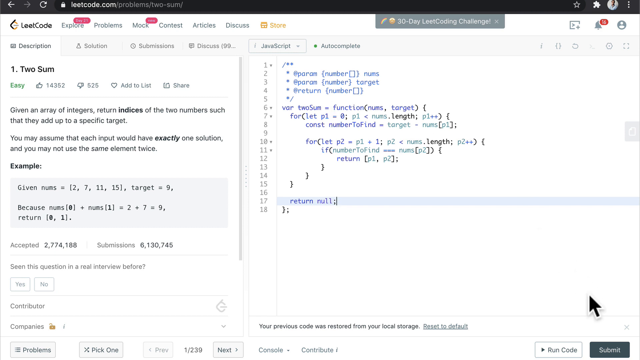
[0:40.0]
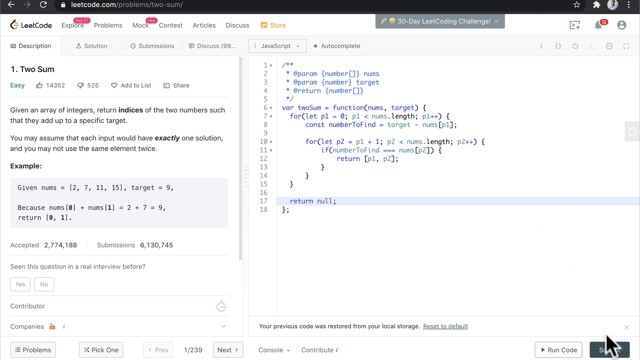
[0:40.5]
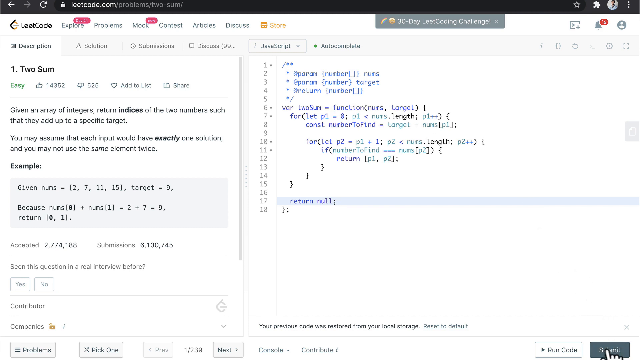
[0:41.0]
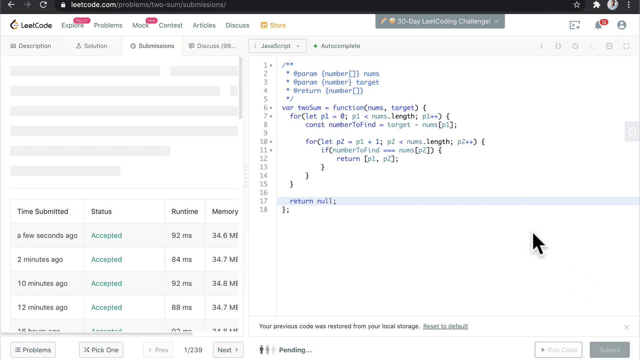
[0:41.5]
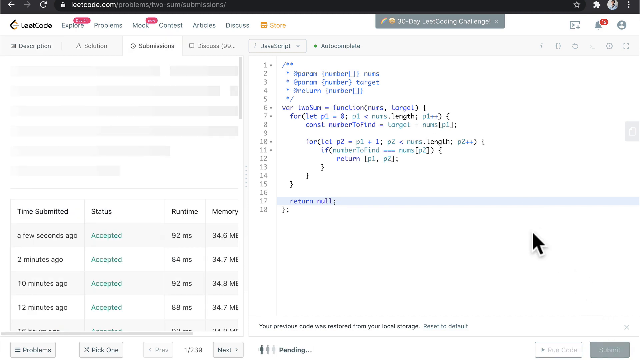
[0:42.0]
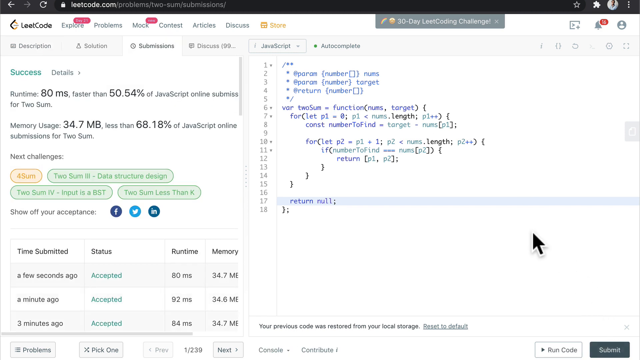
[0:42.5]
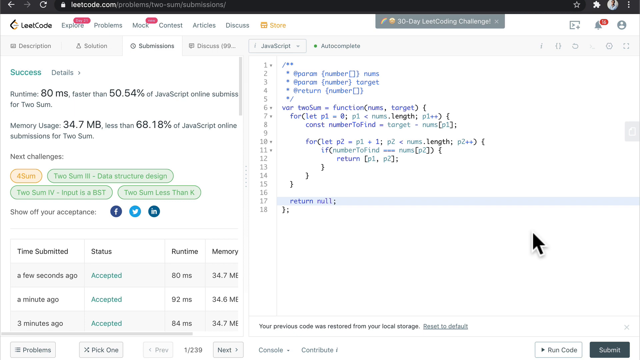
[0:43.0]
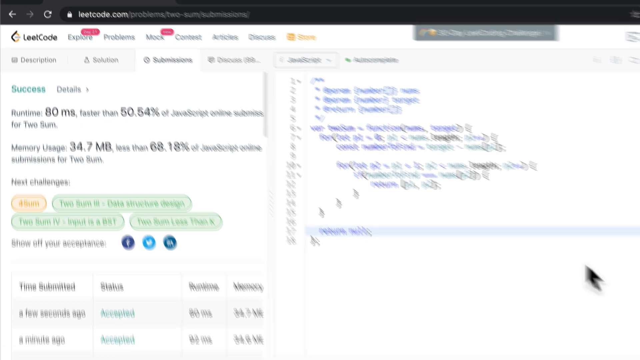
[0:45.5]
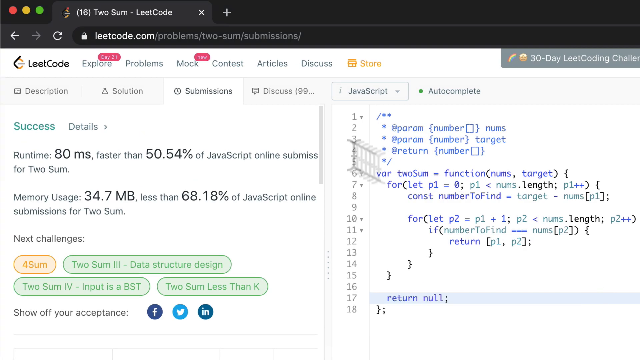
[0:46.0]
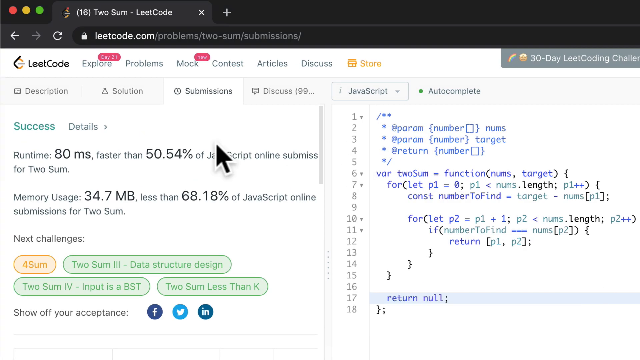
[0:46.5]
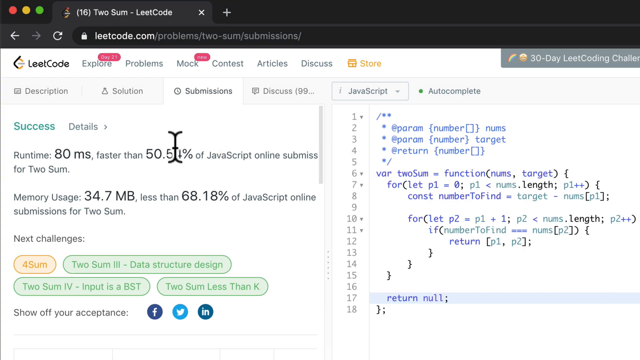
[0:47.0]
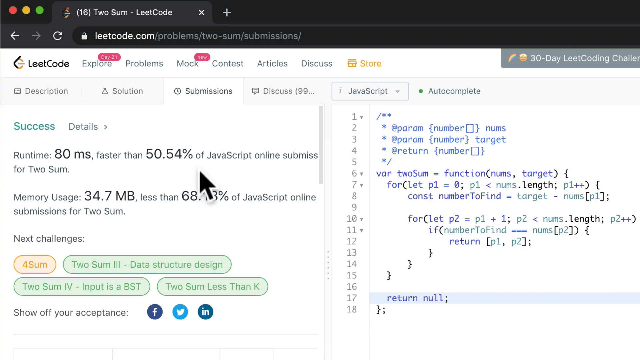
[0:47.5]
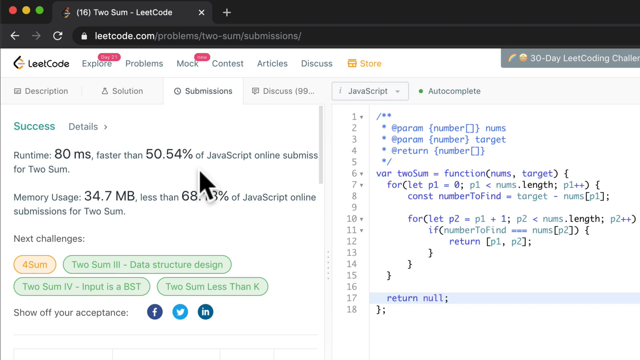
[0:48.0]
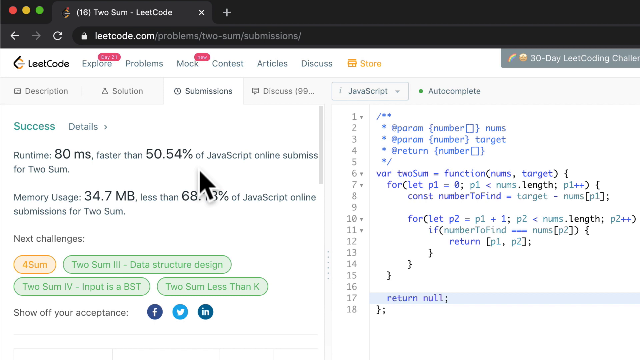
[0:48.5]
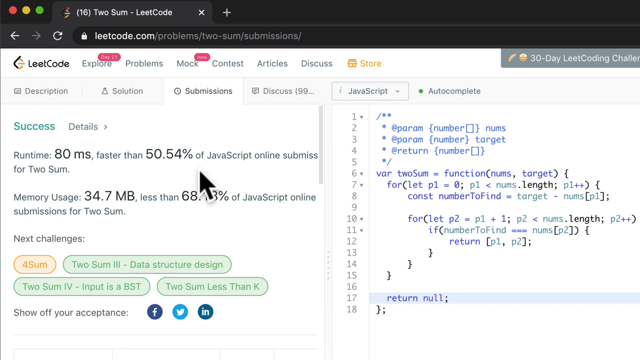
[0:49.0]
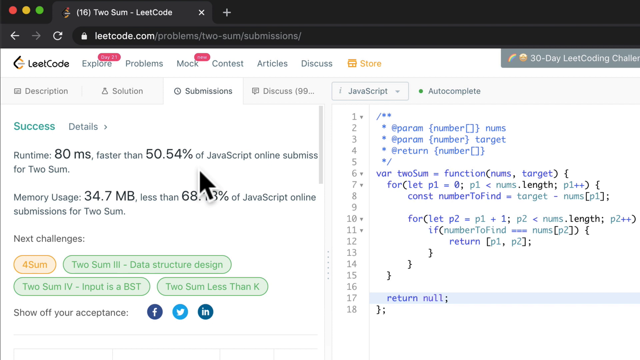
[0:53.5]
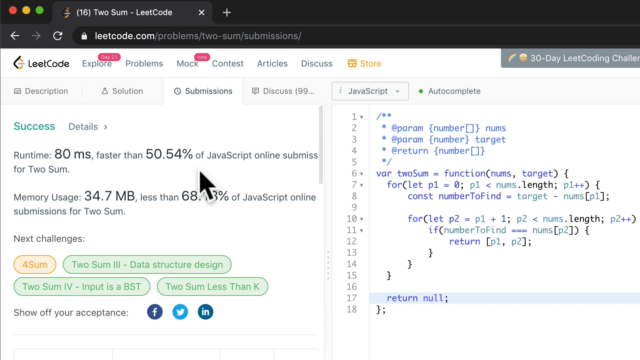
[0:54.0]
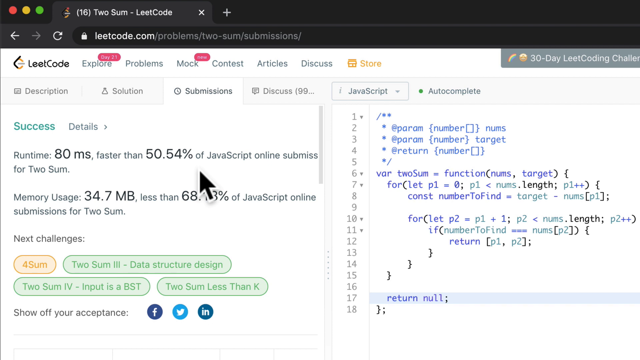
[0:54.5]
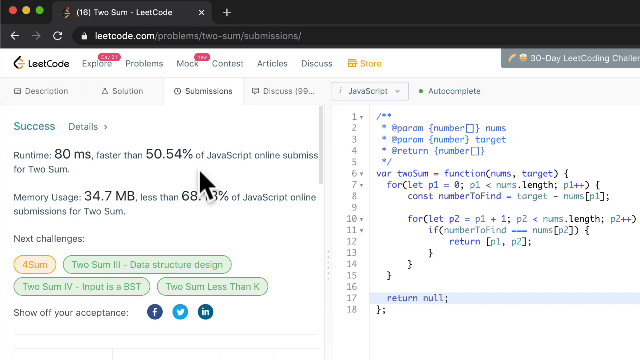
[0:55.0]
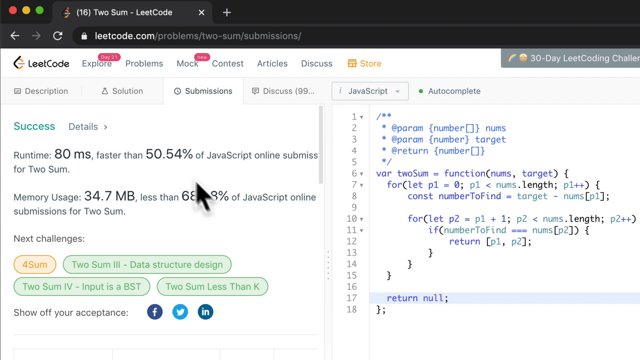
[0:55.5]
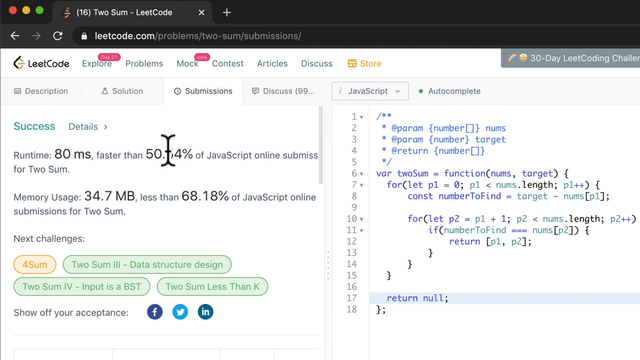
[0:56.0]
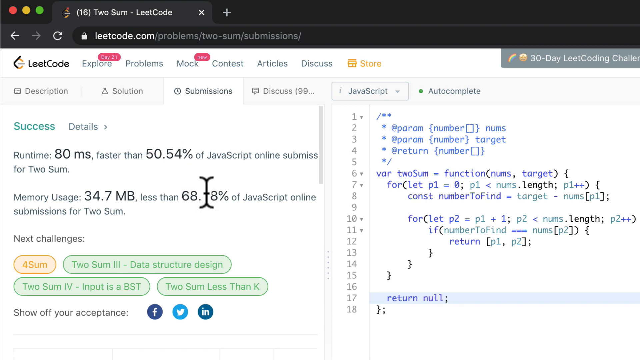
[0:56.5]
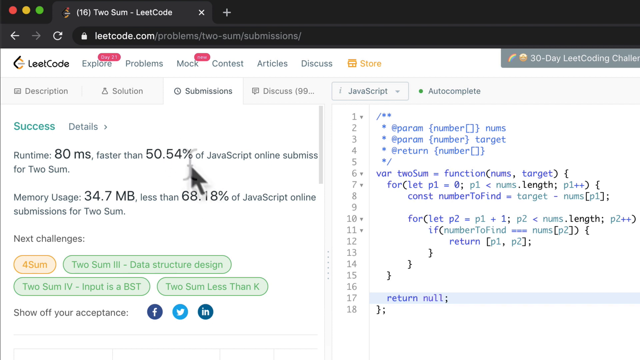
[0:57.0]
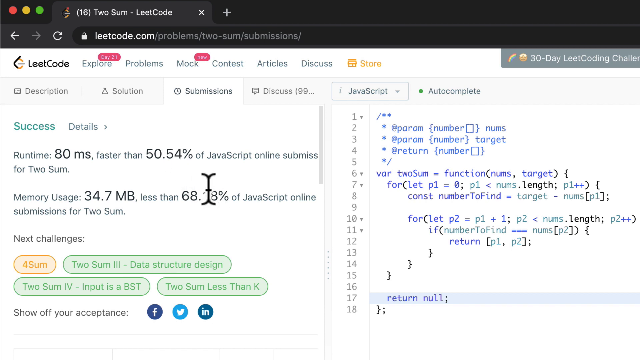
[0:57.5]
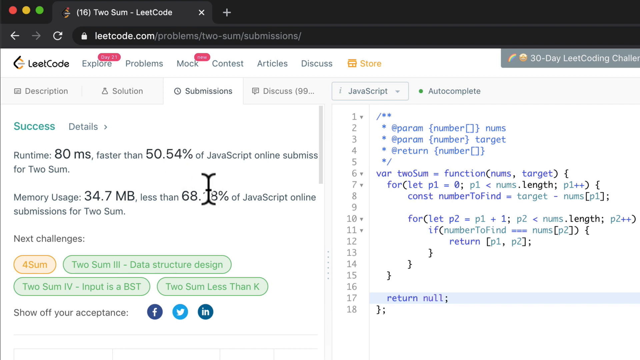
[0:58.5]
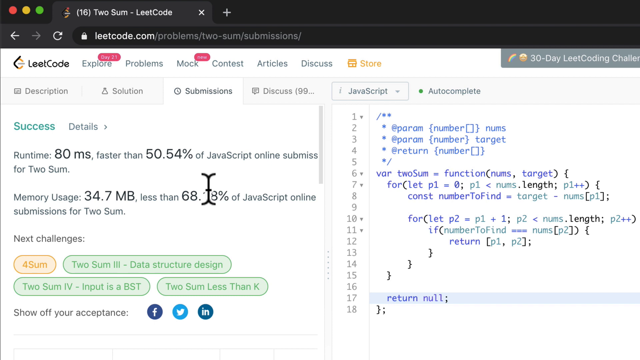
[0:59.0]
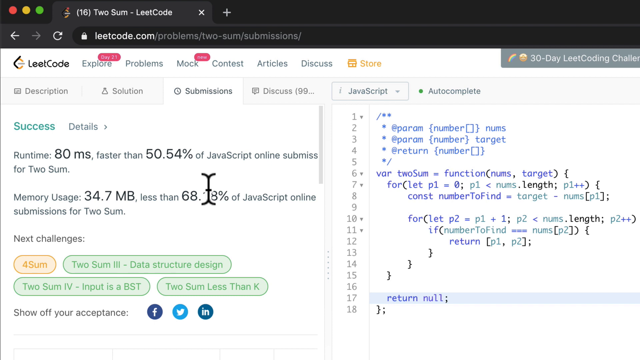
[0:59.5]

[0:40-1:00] The person changes the page from the zoomed-out view of the two sum code and zooms in on a new section that says "success" with details about the result. It reads "run time is 80 milliseconds, faster than 50.54% of JavaScript online submissions" and "memory usage, 34.7 megabytes, less than 68.6", with the rest of that number hidden by the mouse, followed by "of JavaScript online submissions for two sum". The mouse points at the percentages, possibly indicating that this code is faster and uses less memory than other submissions.